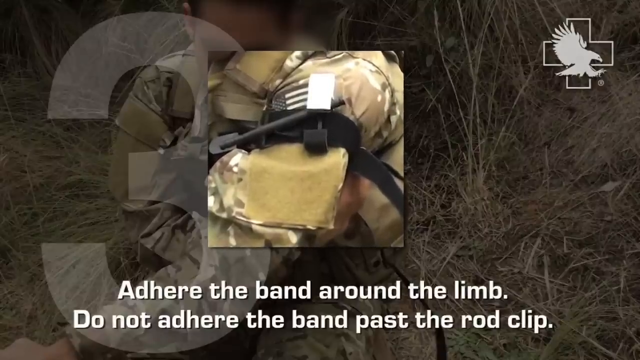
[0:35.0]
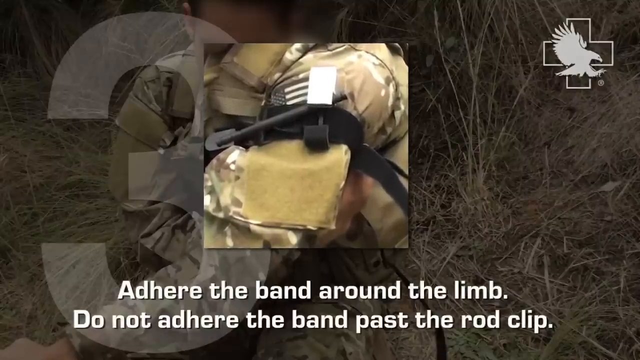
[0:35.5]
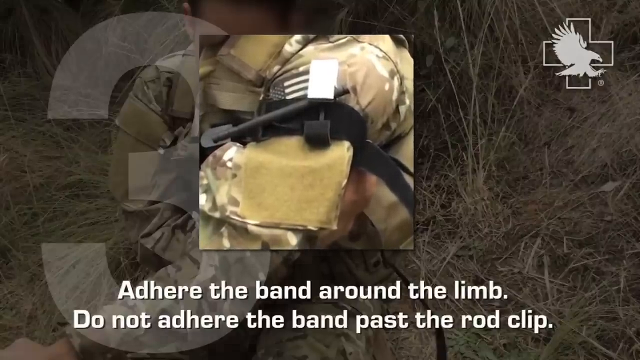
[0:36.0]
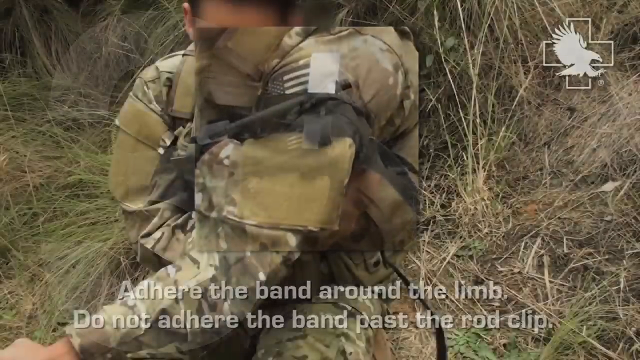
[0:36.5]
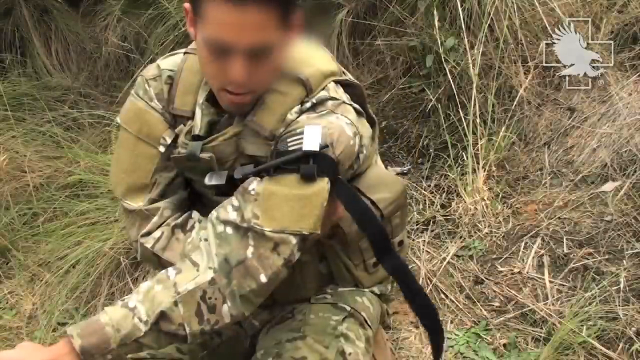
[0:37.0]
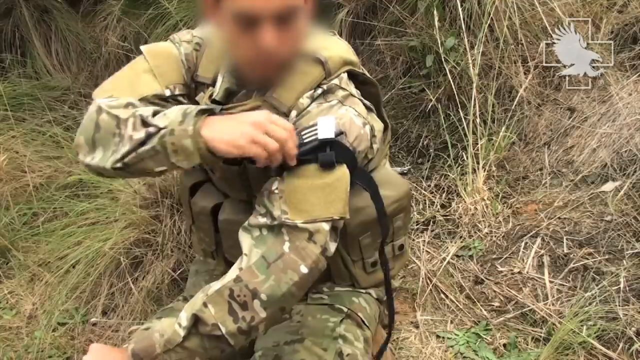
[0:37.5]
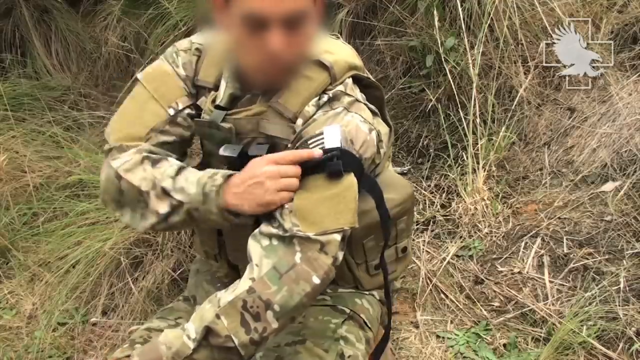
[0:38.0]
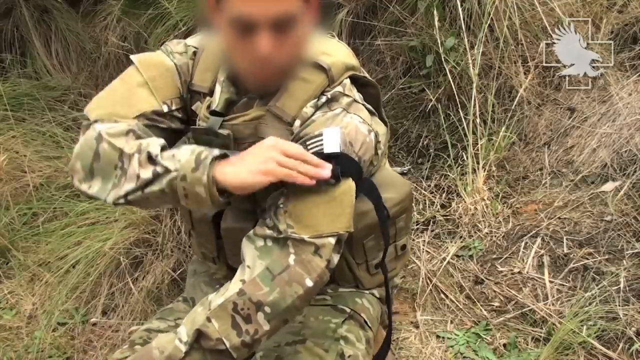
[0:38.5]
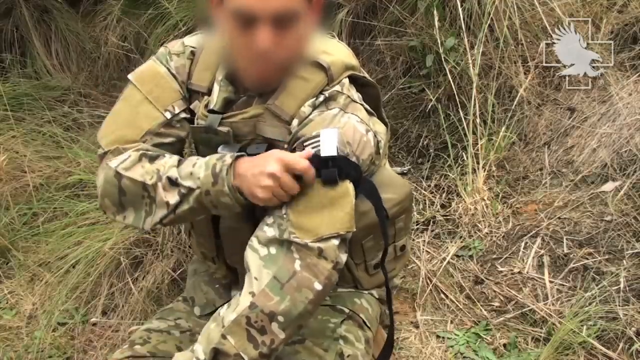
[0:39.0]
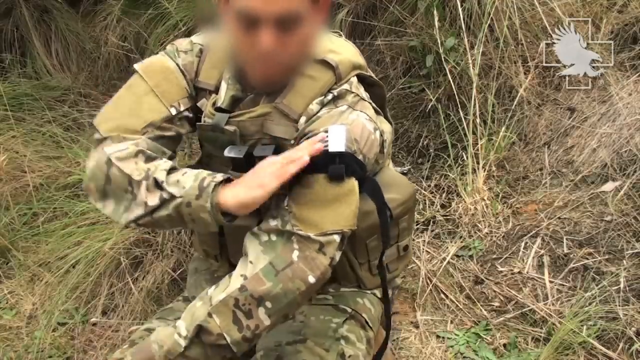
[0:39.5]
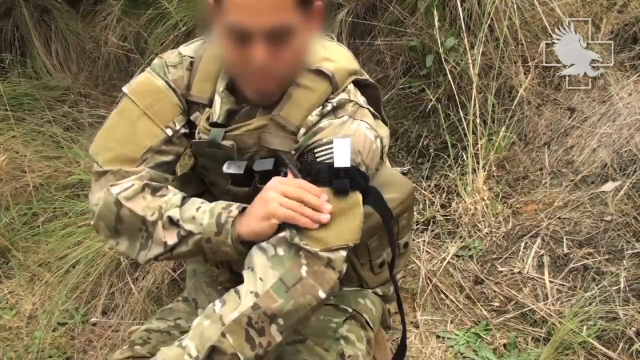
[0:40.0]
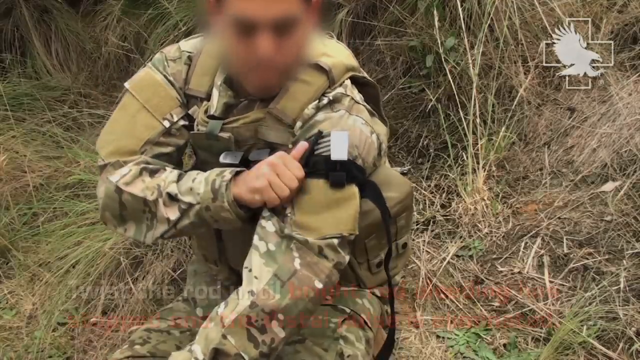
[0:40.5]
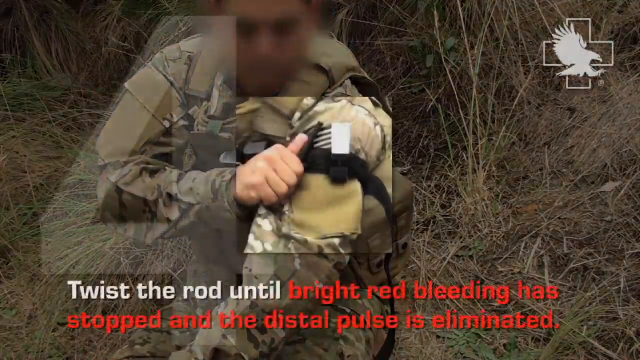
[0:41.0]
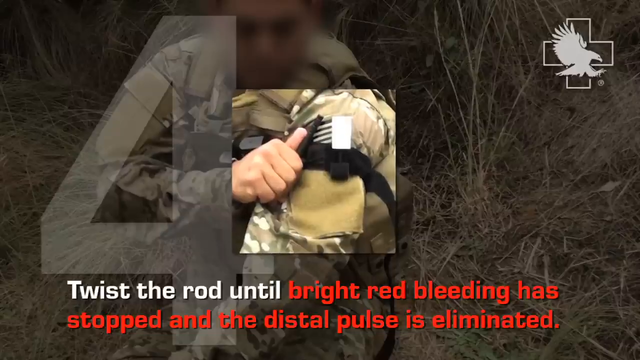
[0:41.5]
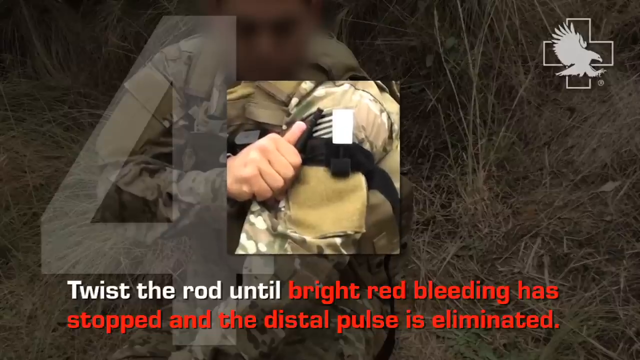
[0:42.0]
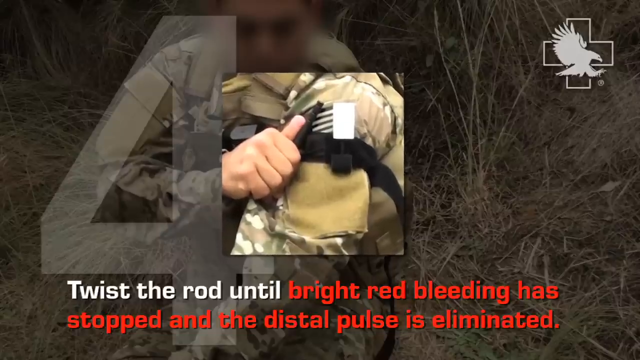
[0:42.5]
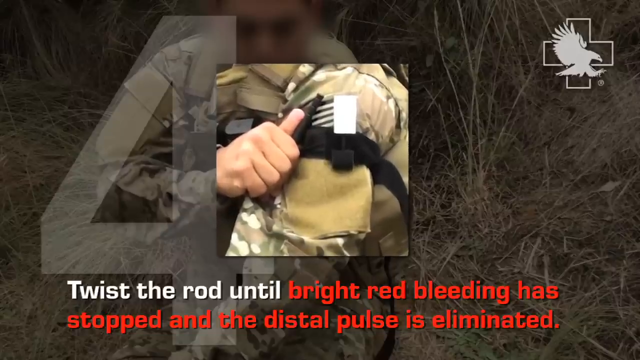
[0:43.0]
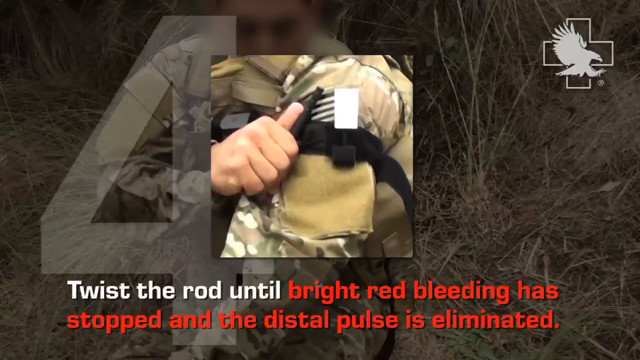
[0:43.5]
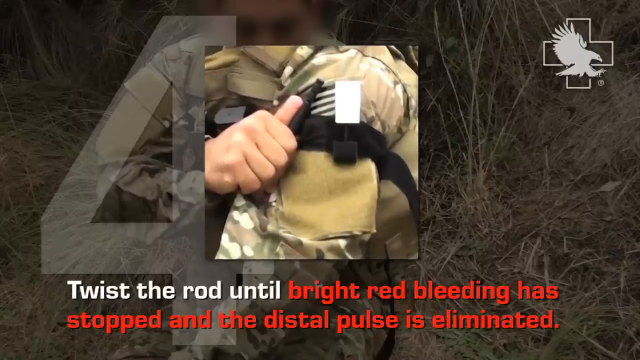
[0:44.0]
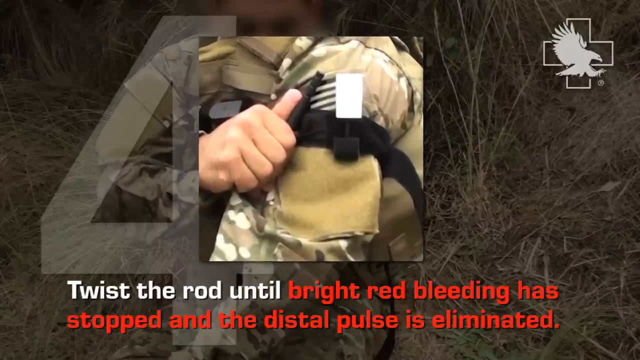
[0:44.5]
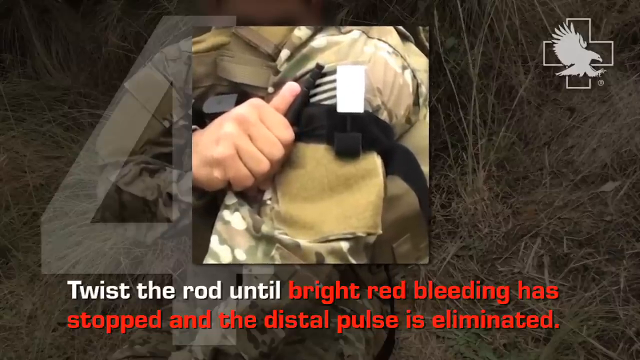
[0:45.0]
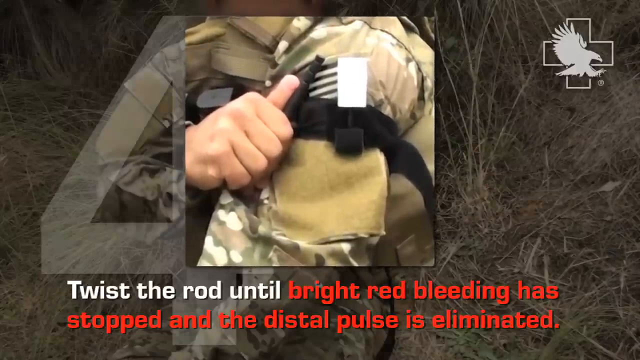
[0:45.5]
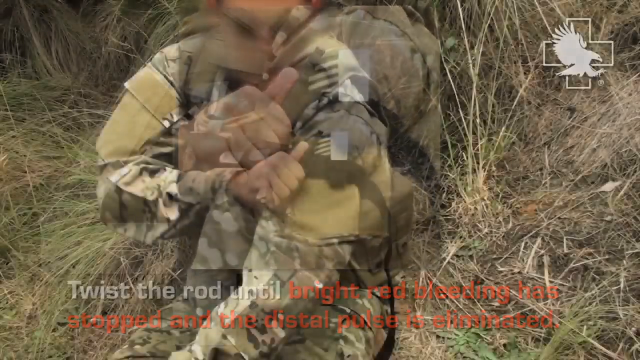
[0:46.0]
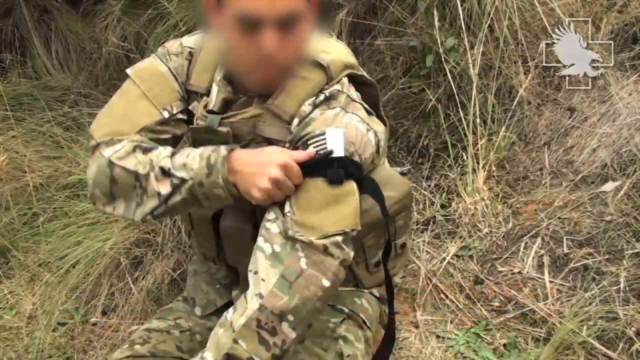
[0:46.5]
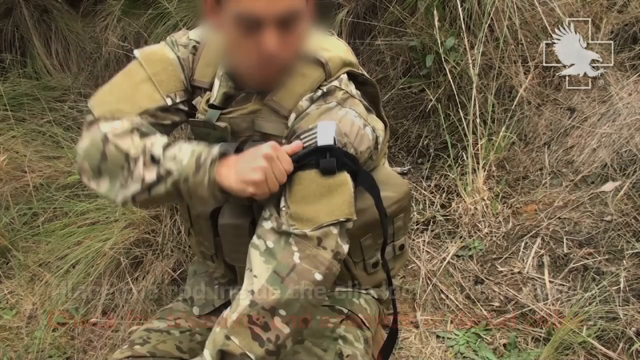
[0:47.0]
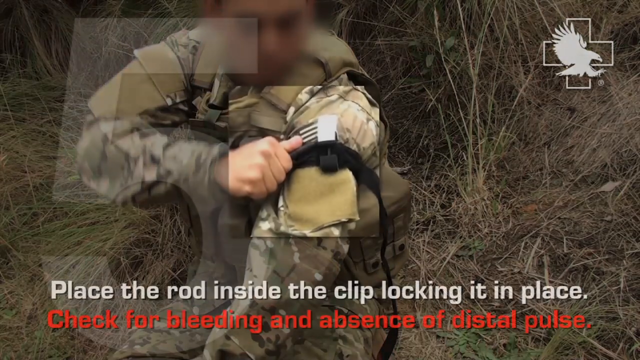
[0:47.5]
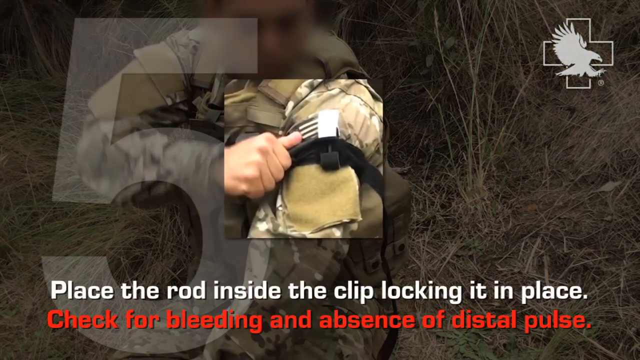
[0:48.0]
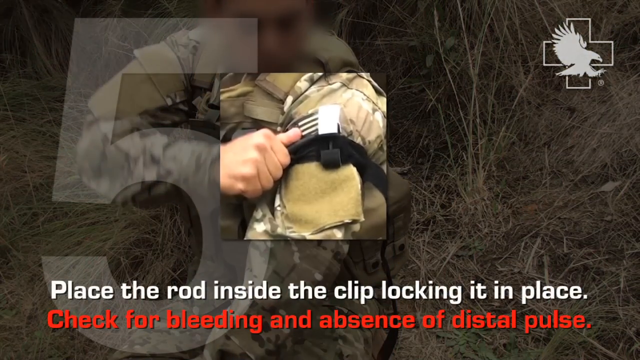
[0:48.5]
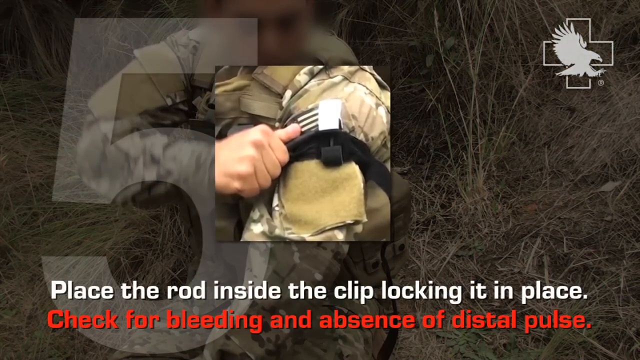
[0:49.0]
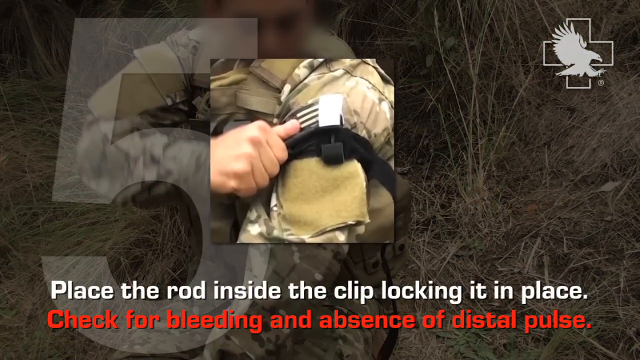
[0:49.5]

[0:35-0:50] A soldier is in the middle of some grass or a field. The beginning covers adhering the band across the limb, and there is a rod; the band is not to be tightened past the rod. The man turns the rod clockwise, and text reads "twist the rod until bright red bleeding has stopped and the digital pulse is eliminated." The rod is then placed inside the clip, where it locks in place.